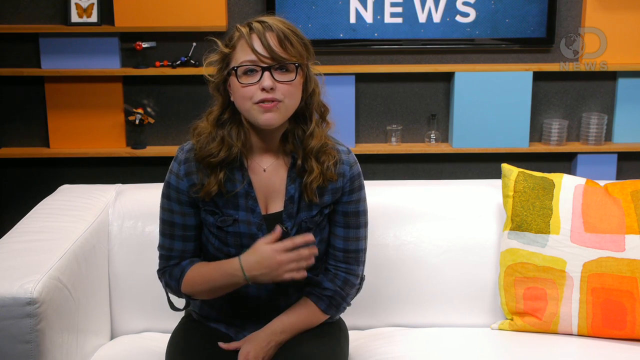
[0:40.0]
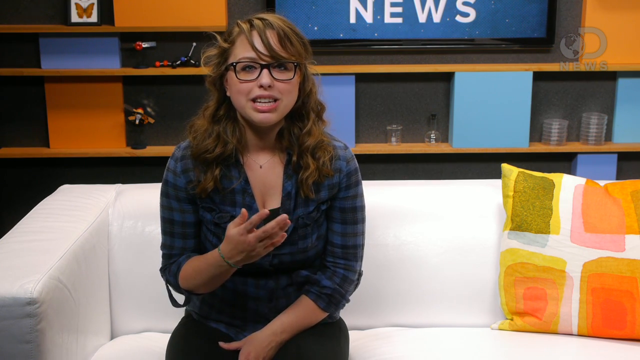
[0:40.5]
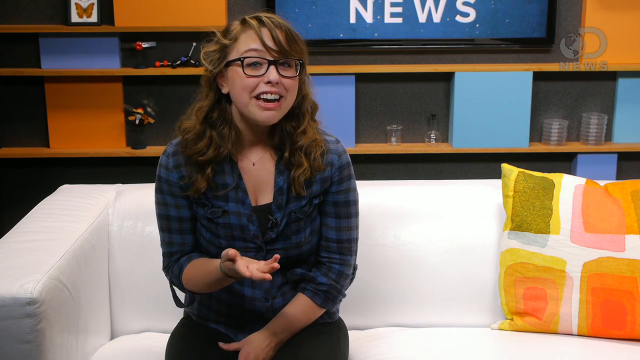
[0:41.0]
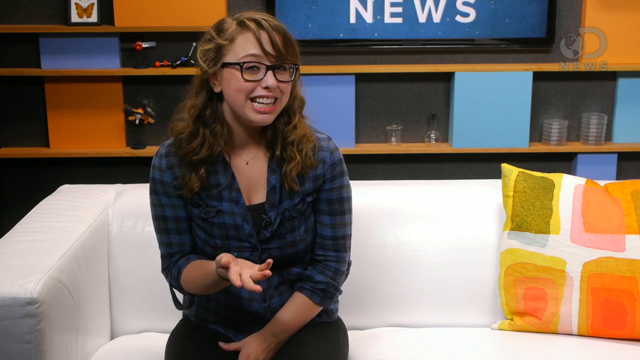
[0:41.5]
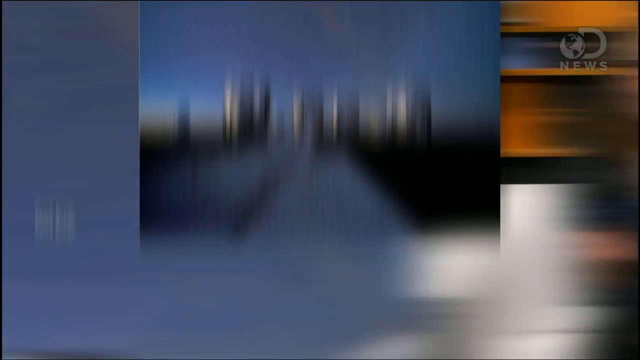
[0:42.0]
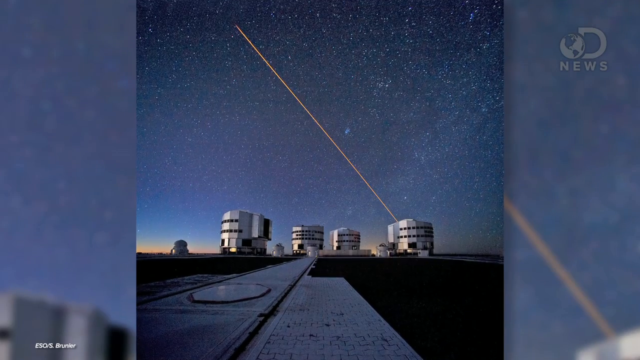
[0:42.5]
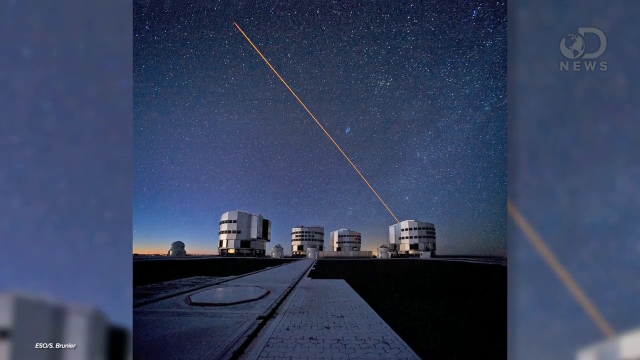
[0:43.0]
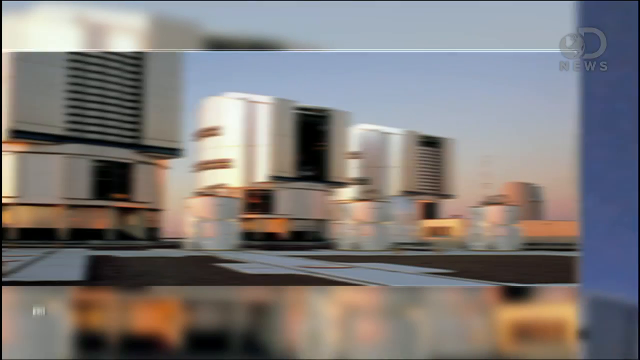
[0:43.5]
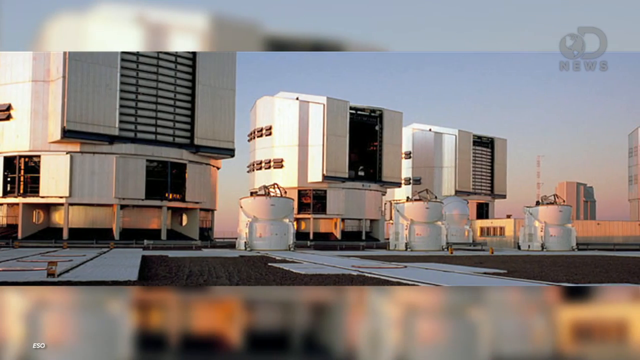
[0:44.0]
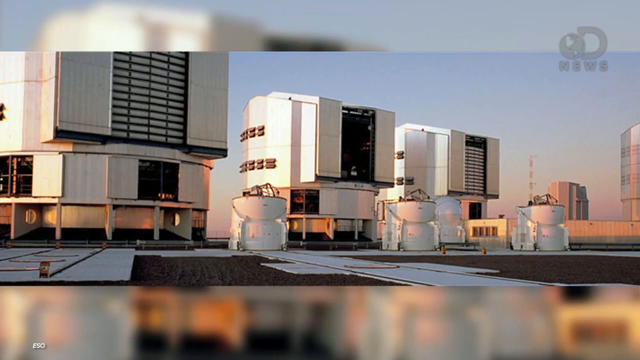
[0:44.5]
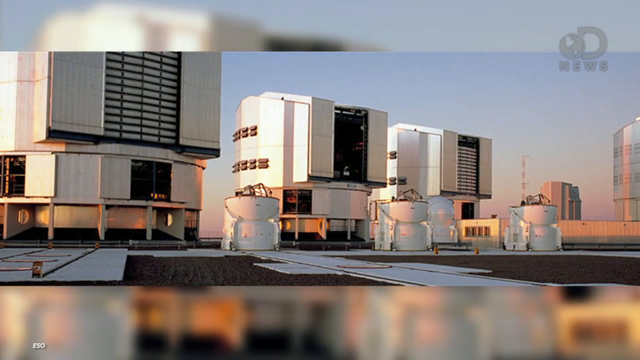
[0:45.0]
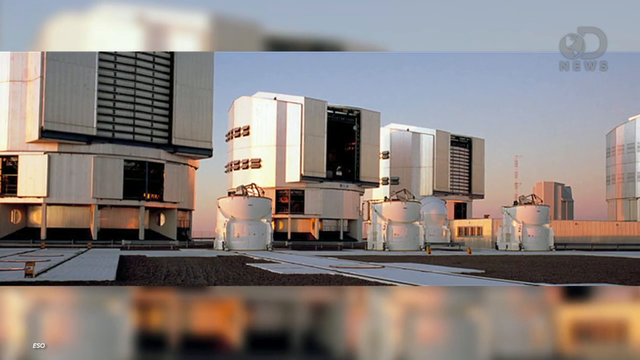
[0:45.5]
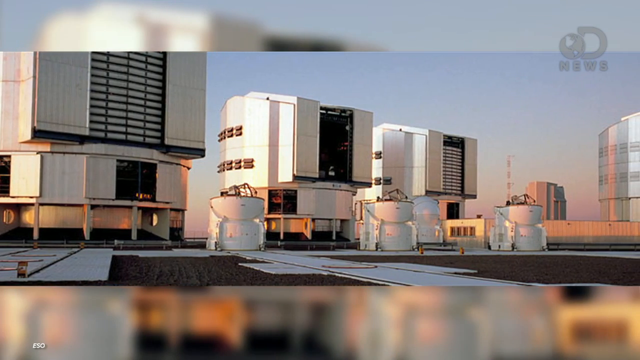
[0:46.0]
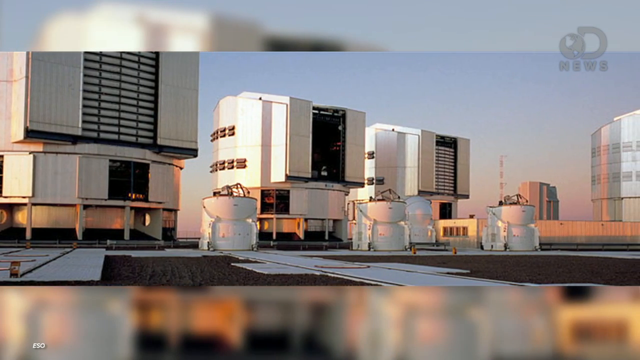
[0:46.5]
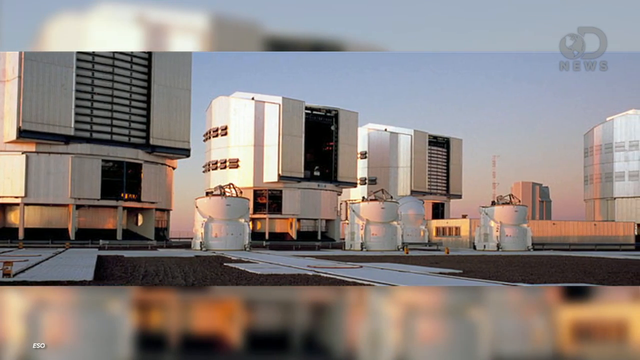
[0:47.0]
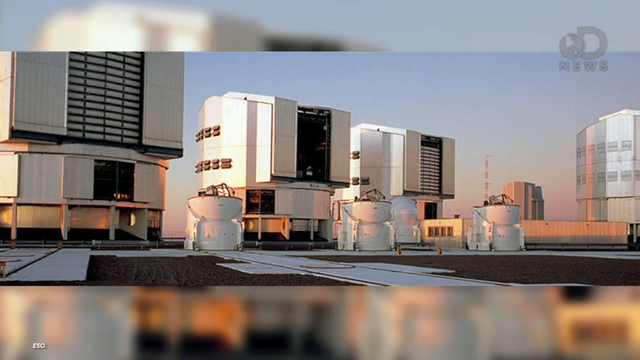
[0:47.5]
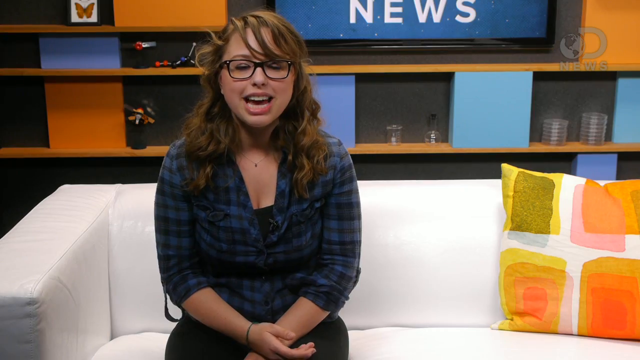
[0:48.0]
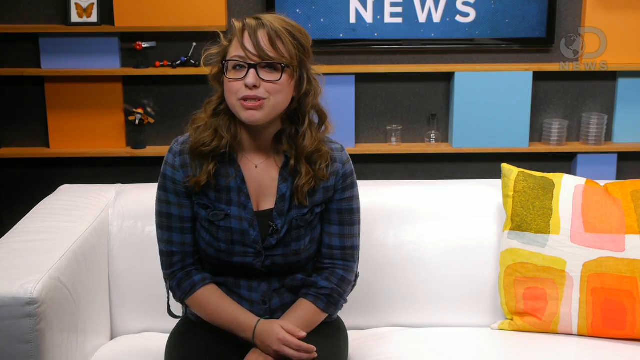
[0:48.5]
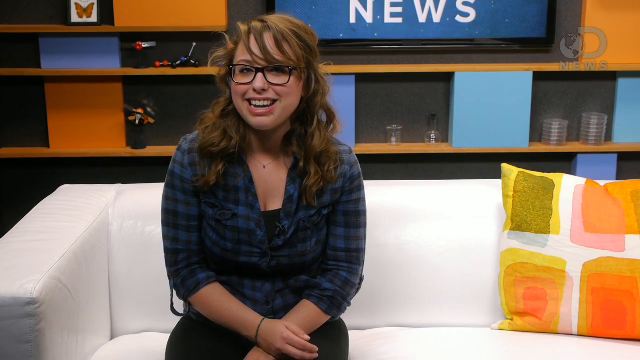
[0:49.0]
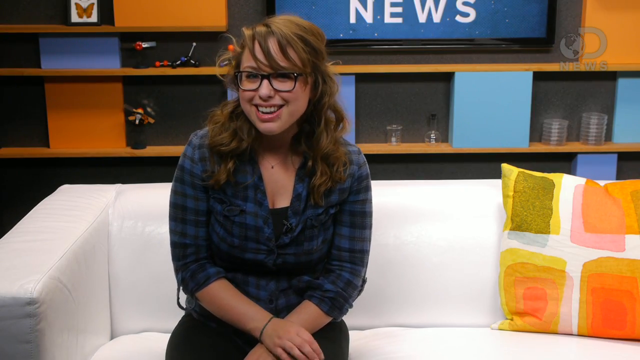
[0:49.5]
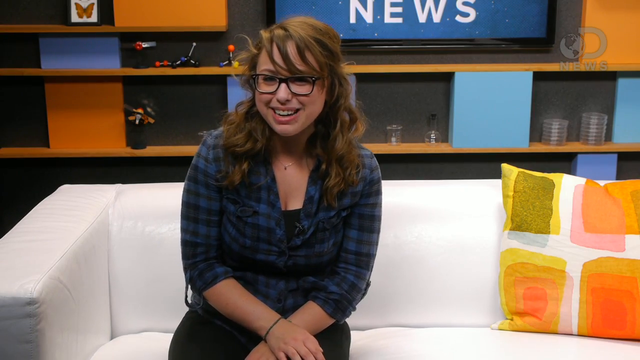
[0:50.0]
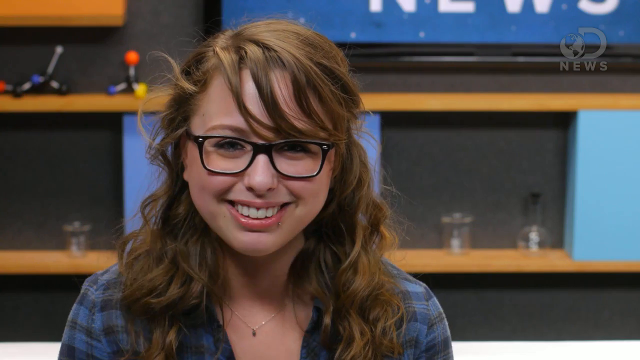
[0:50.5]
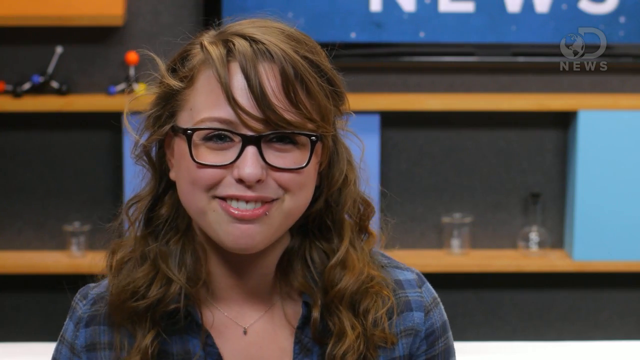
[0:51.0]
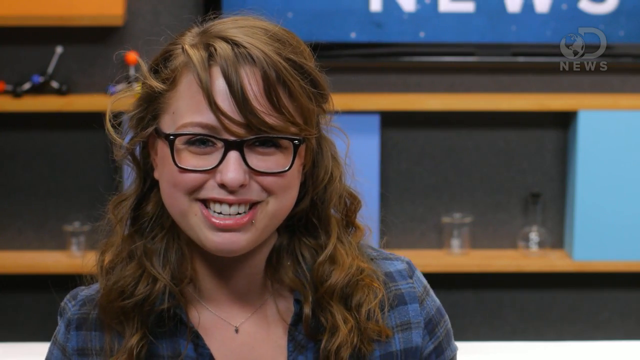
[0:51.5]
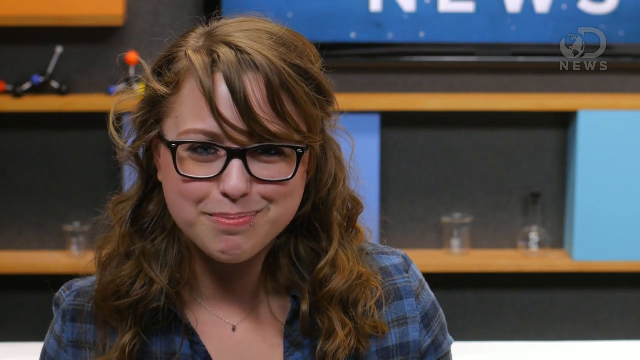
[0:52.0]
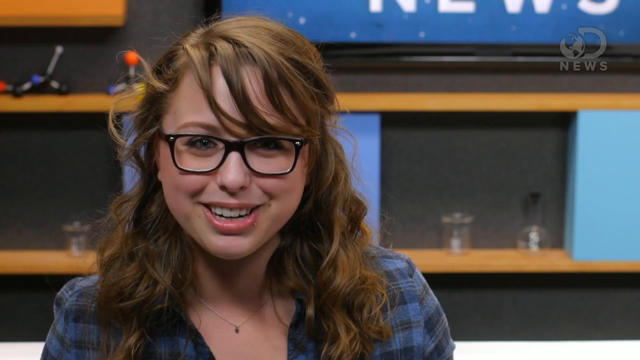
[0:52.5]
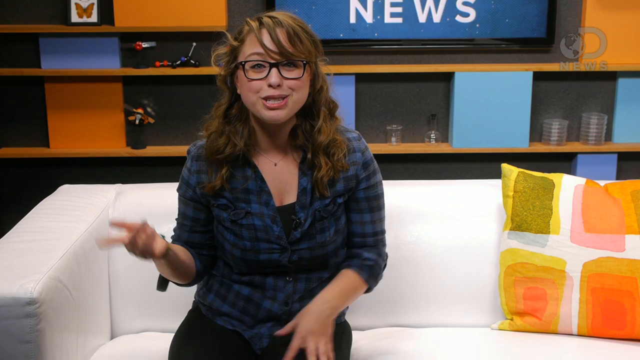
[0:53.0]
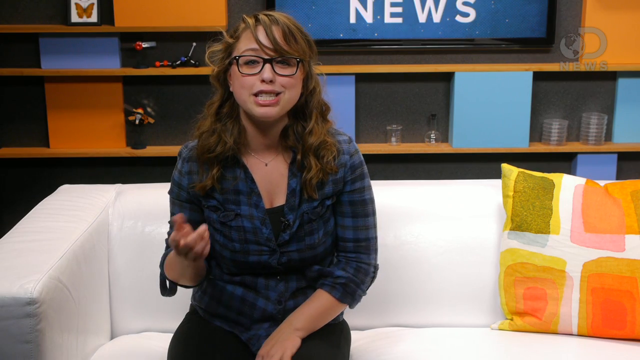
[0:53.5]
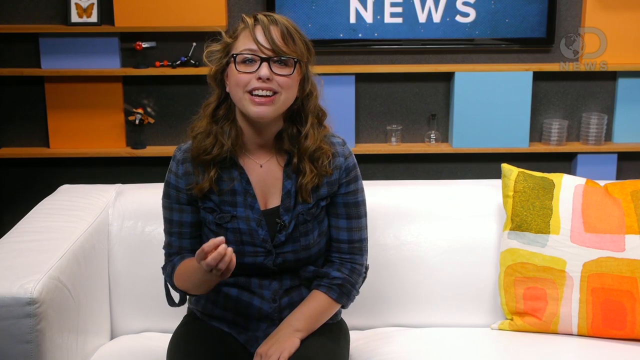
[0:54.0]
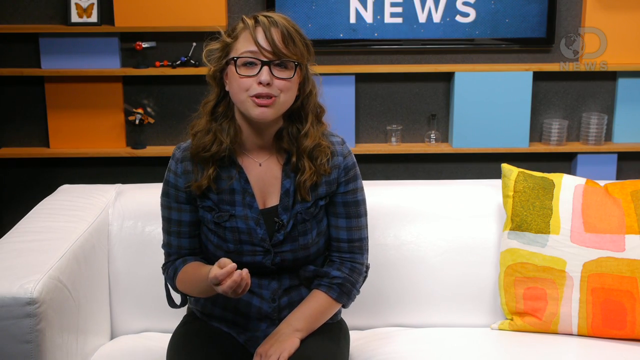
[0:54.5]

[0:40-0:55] Pictures show what appear to be technical things, maybe in outer space: very large white items that almost look like houses but look like maybe transmitters or electrical equipment, possibly something for NASA. Some pictures show outer space with lots of stars in the background. There is a pole sticking up, or possibly just a drawn line, and shiny silver cylinders appear in some of the pictures. The woman smiles as she talks. The view kind of zooms in on these transmitter-like items, and at the bottom there is a line where a little bit of sunlight is left.